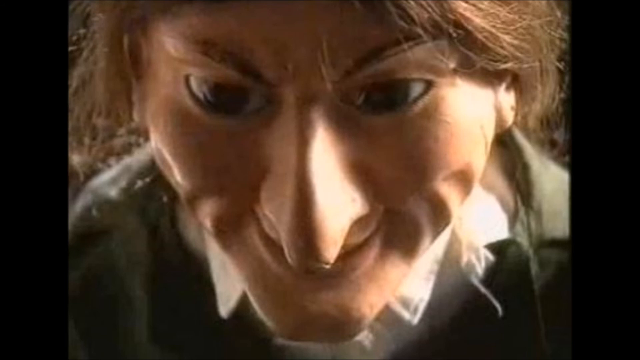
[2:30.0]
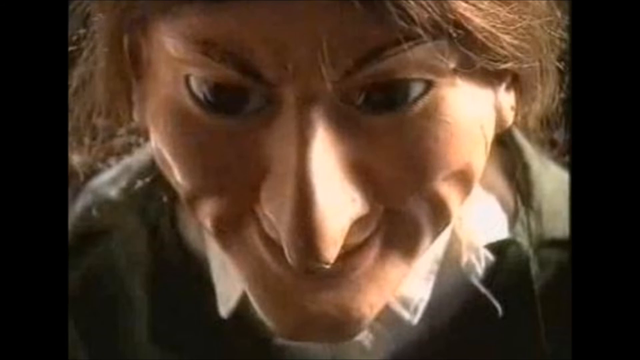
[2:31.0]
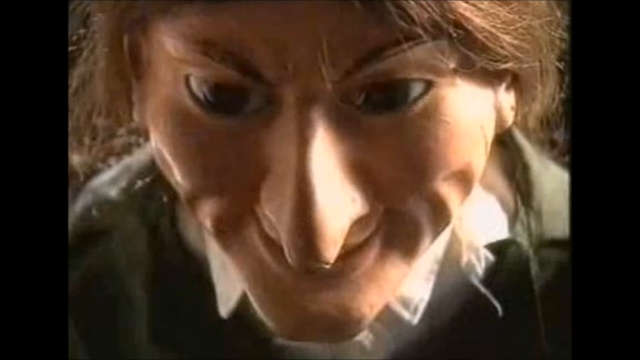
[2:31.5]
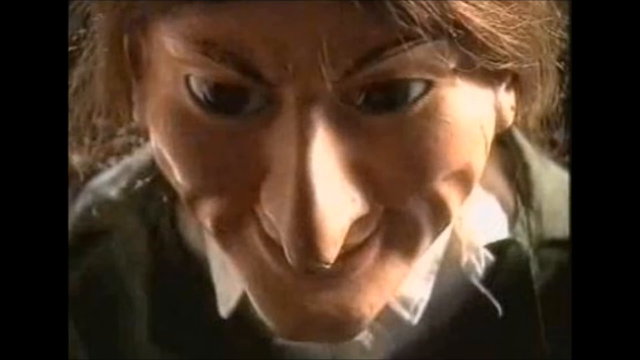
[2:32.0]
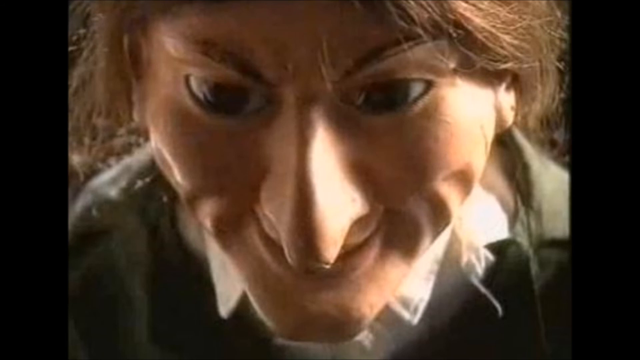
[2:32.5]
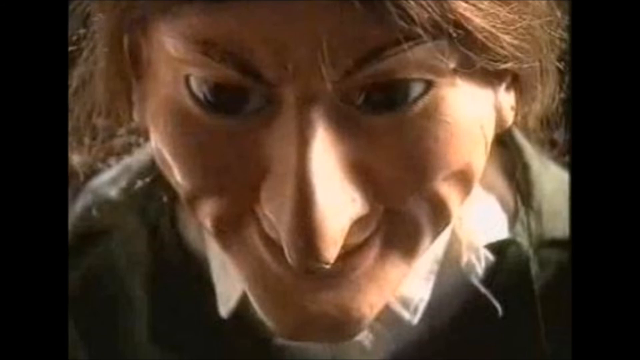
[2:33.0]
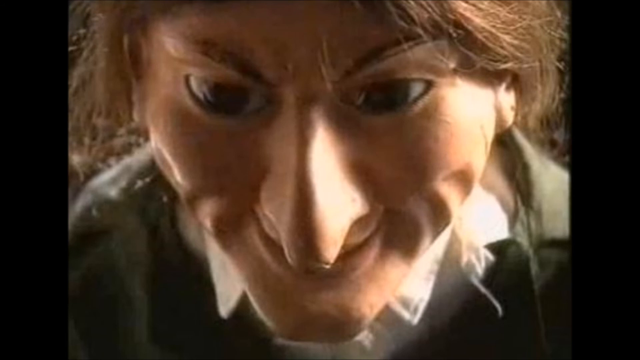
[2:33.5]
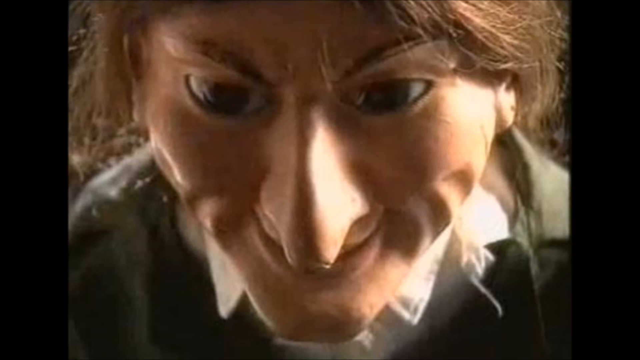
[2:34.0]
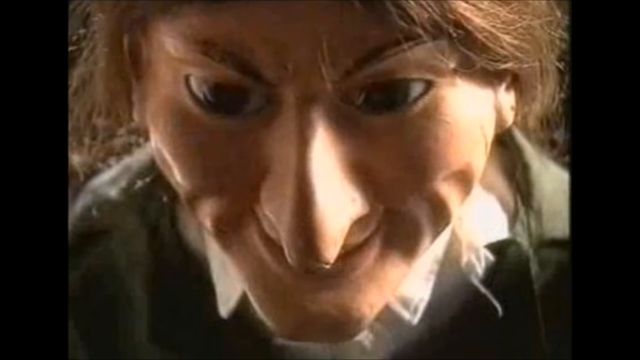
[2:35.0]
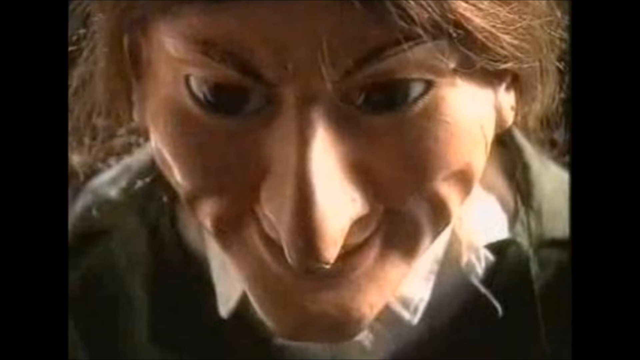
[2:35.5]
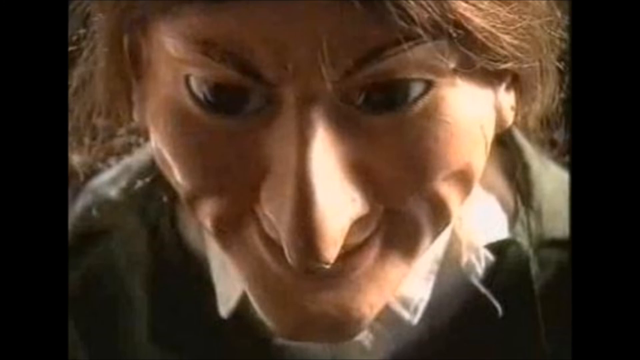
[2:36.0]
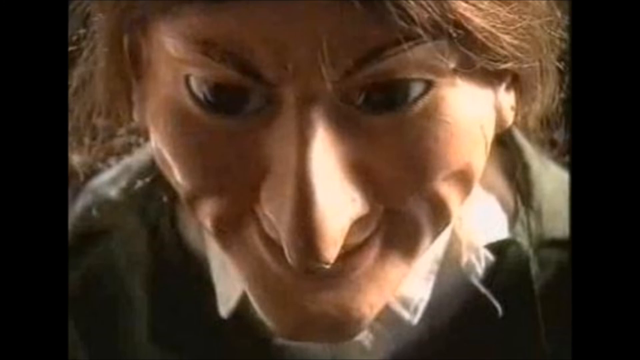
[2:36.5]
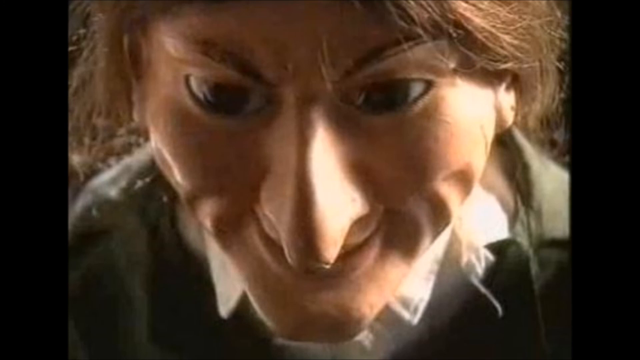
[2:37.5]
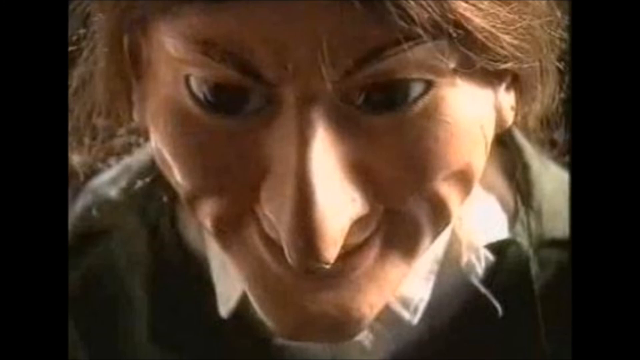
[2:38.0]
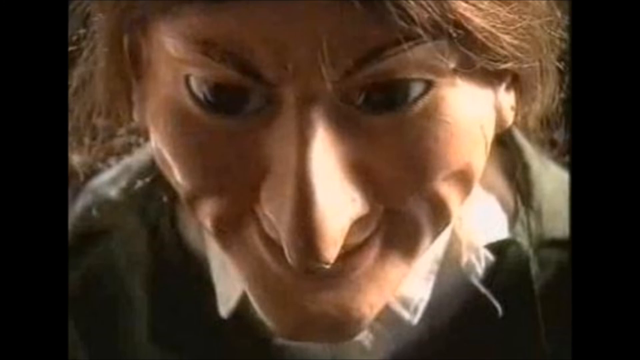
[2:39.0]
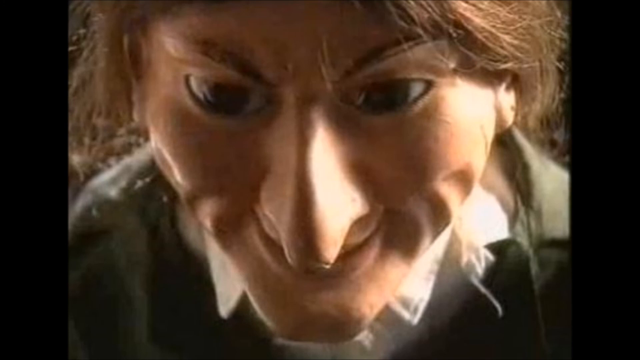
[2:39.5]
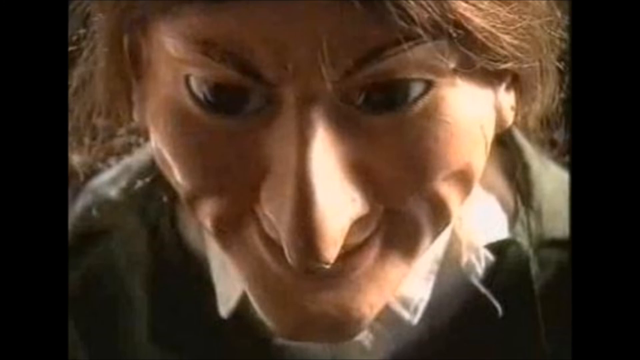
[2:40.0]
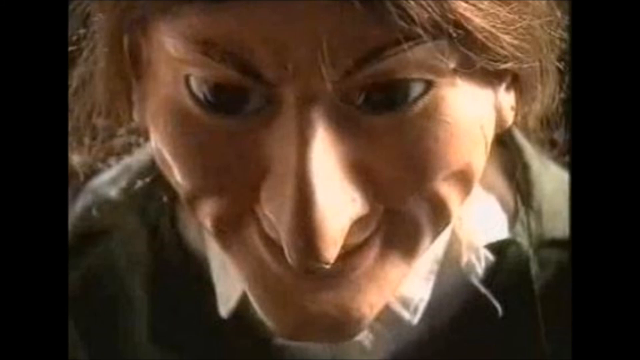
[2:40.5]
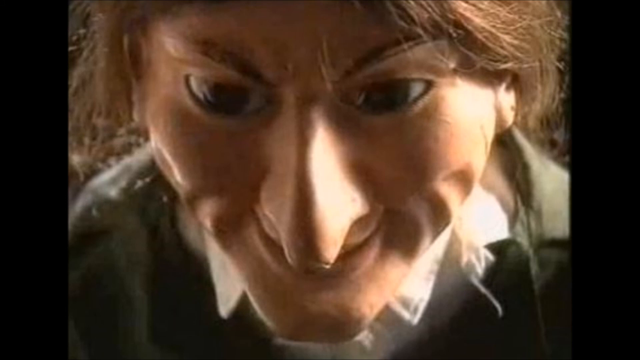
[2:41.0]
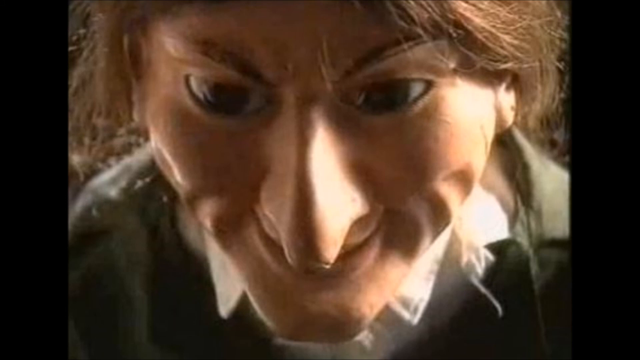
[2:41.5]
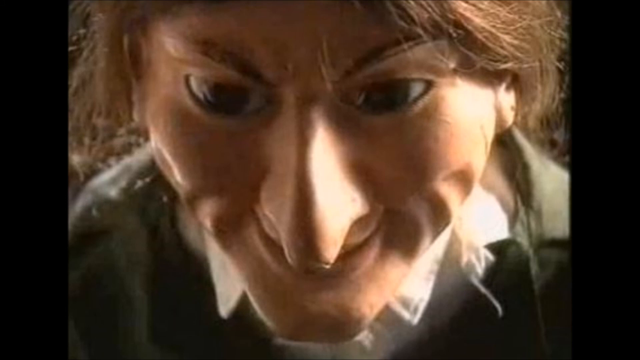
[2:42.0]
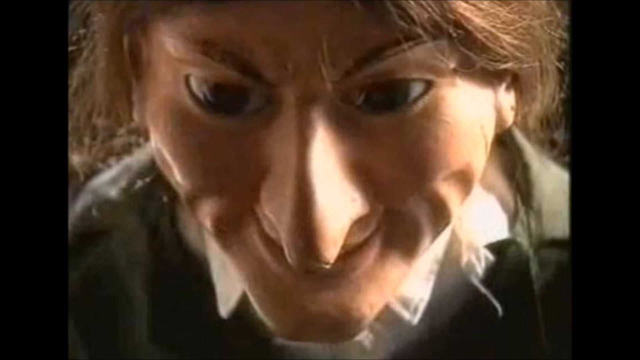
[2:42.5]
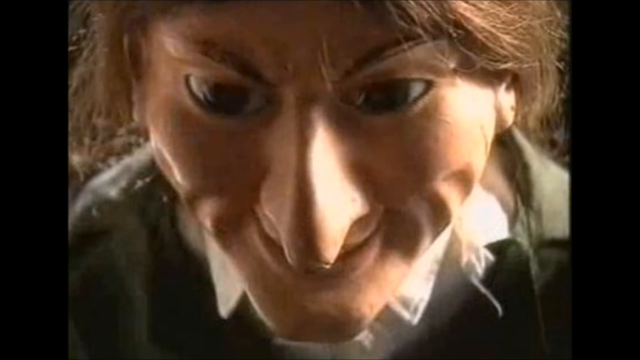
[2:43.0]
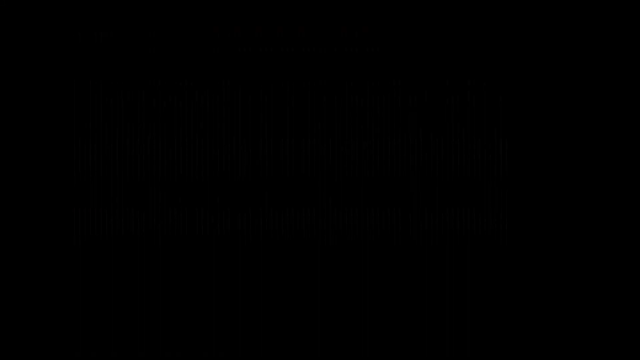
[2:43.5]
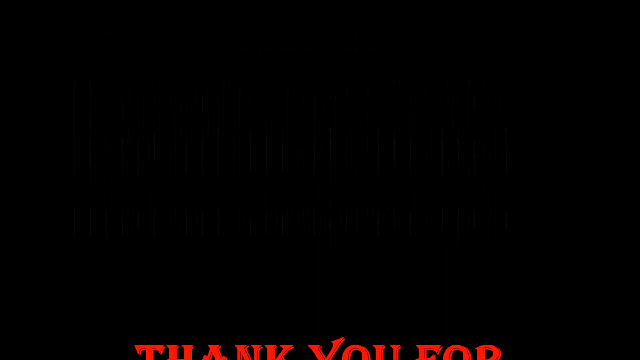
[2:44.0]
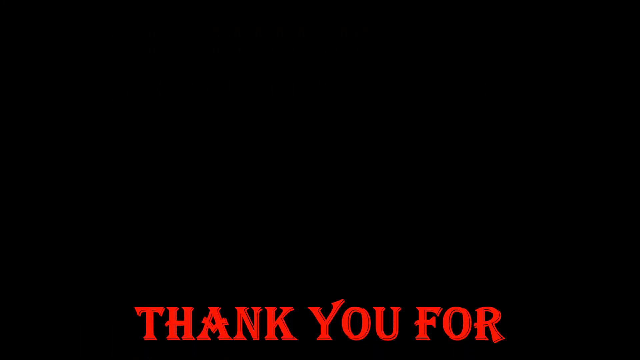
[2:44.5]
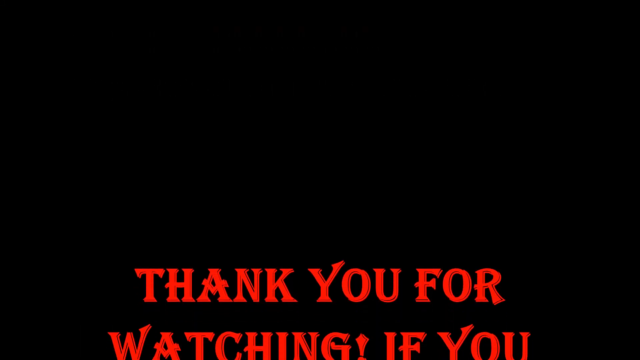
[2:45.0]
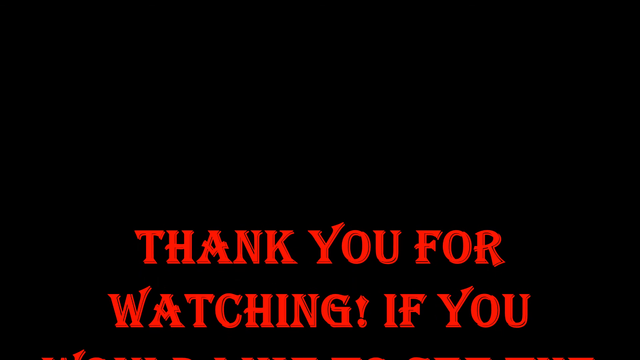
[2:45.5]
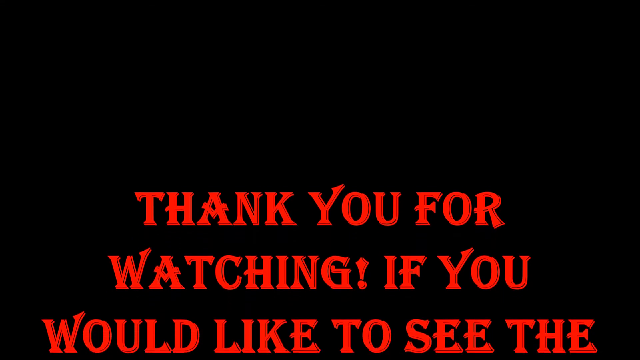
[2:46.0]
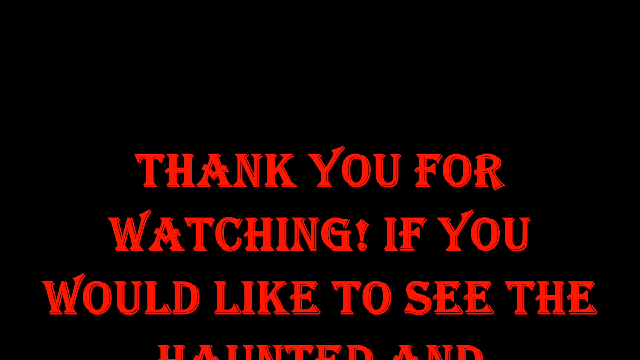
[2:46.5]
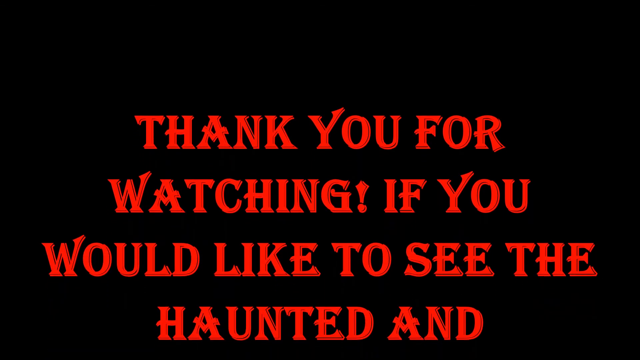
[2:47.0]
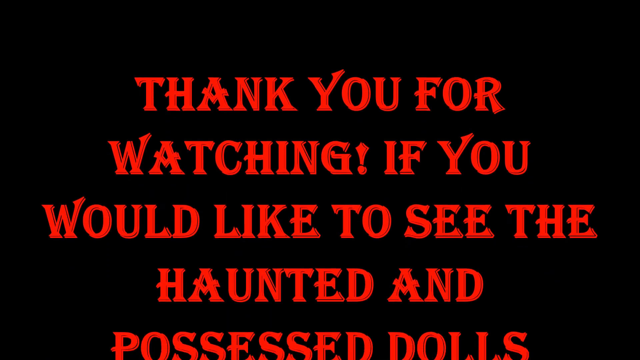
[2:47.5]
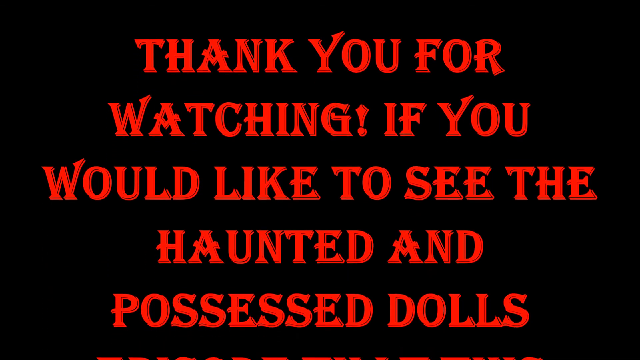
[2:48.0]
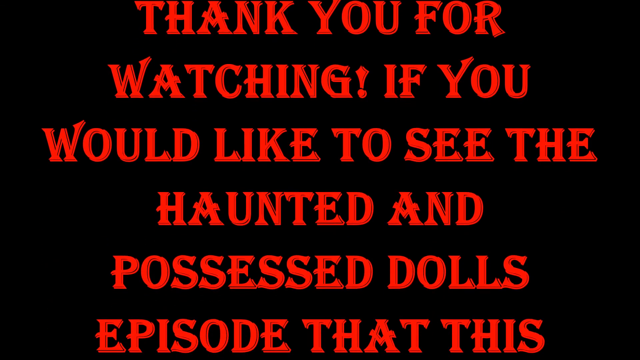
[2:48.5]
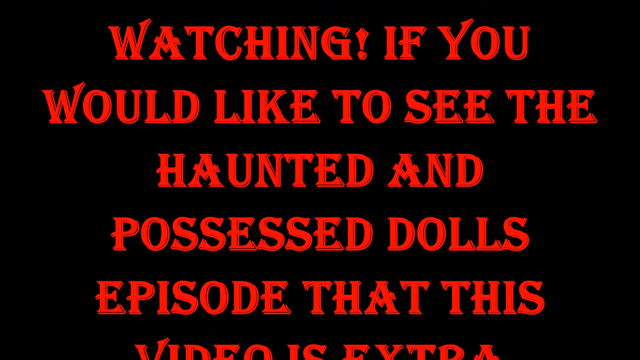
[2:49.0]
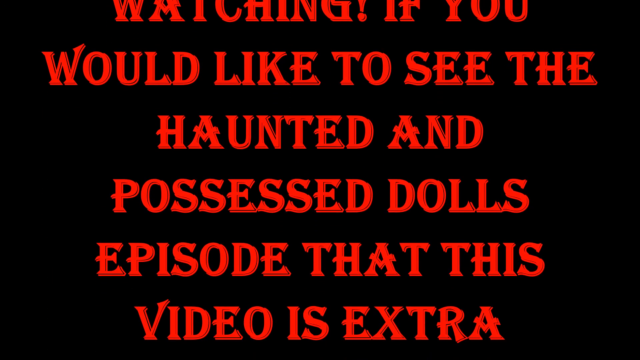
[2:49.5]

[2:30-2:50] A picture of the doll from above shows a very sharp nose, a very sharp chin, dimples on the cheeks, ears sticking out, long eyebrows, and really big eyes with black eye sockets. Its brown hair goes left and right, and a white shirt comes up at the neck from the bottom. The video then moves to an ending screen in red font reading "Thank you for watching" followed by a message about the Haunted and Possessed Dolls episode that this video is extra content for.